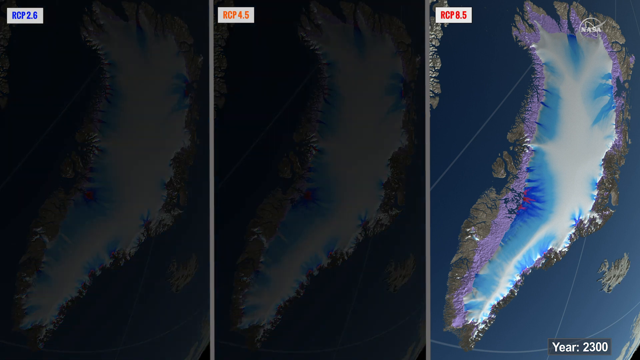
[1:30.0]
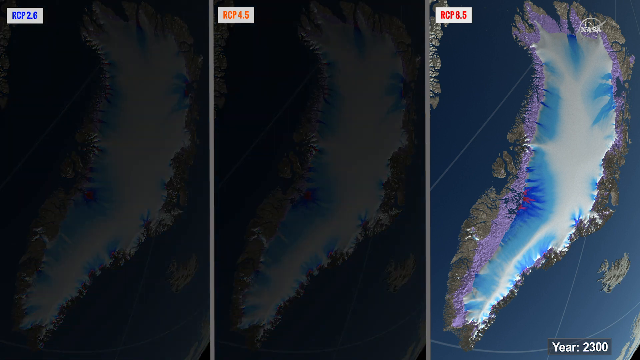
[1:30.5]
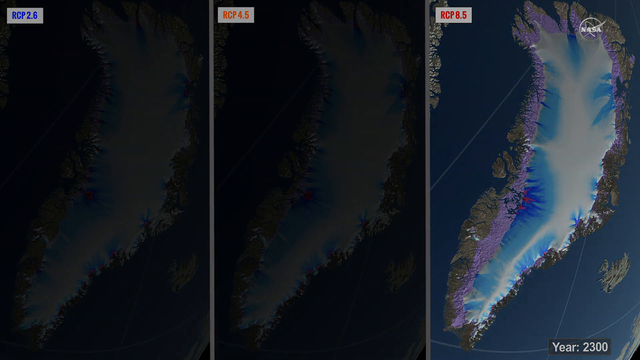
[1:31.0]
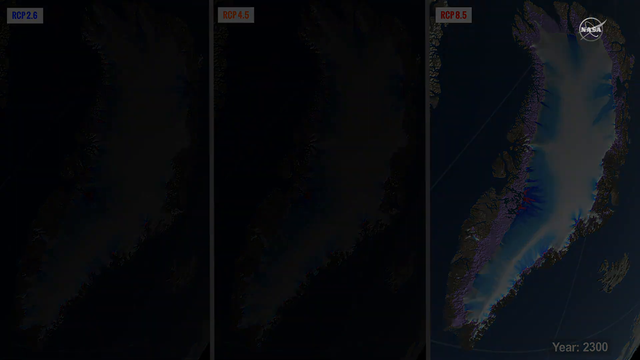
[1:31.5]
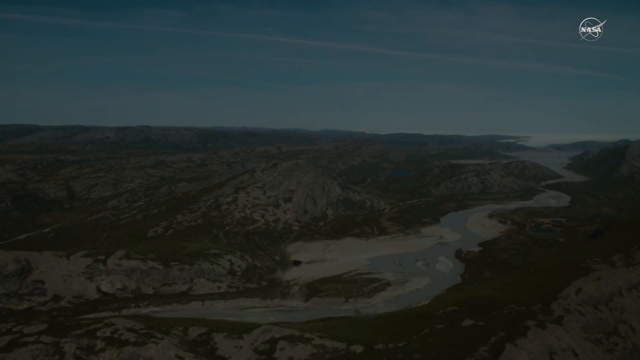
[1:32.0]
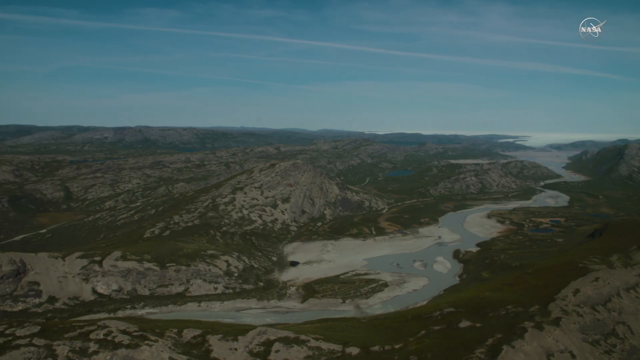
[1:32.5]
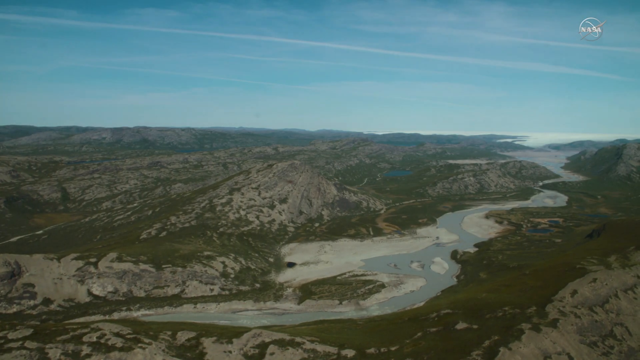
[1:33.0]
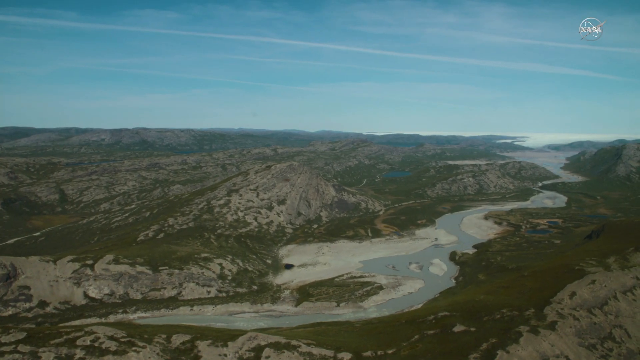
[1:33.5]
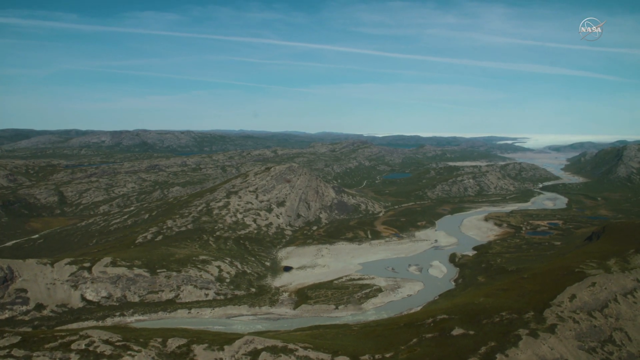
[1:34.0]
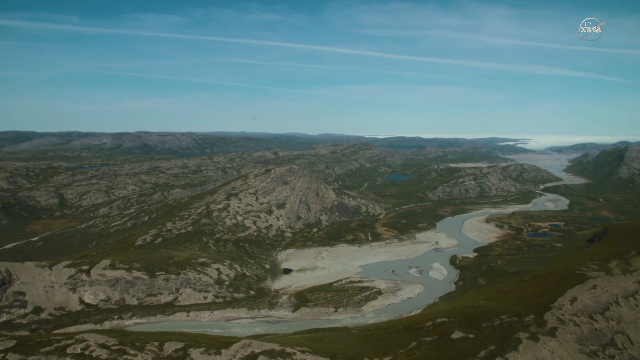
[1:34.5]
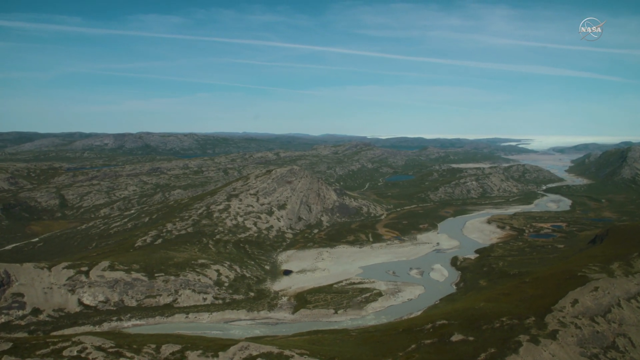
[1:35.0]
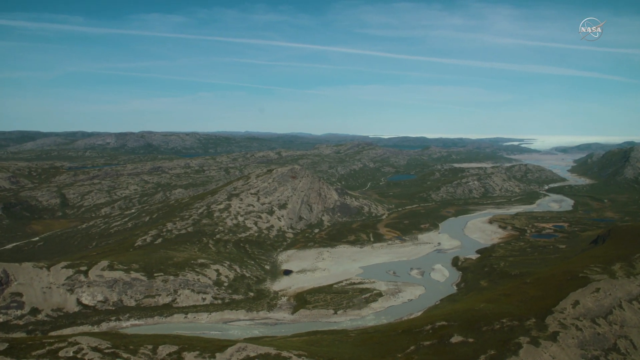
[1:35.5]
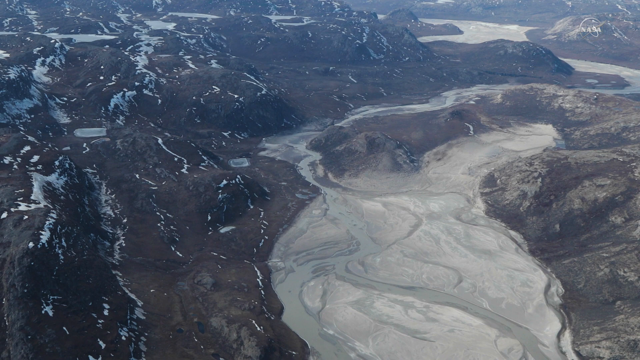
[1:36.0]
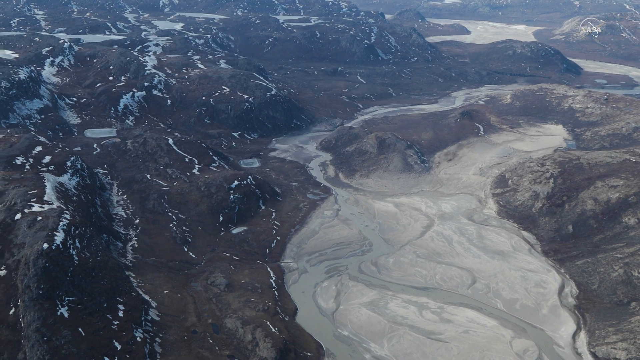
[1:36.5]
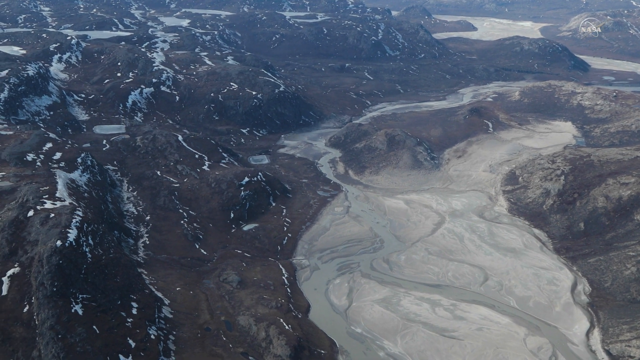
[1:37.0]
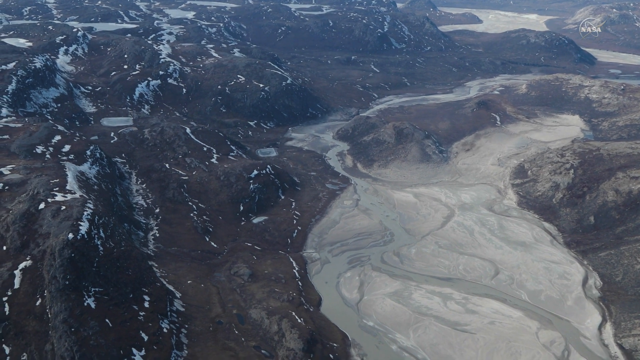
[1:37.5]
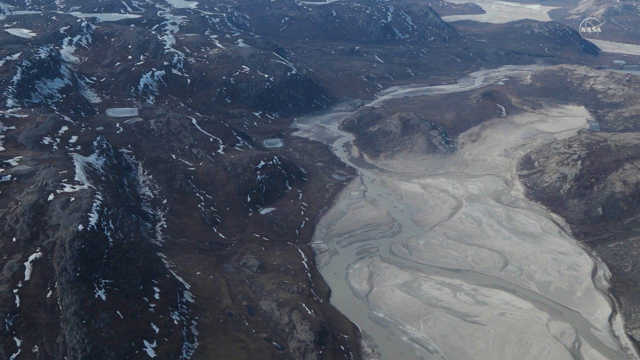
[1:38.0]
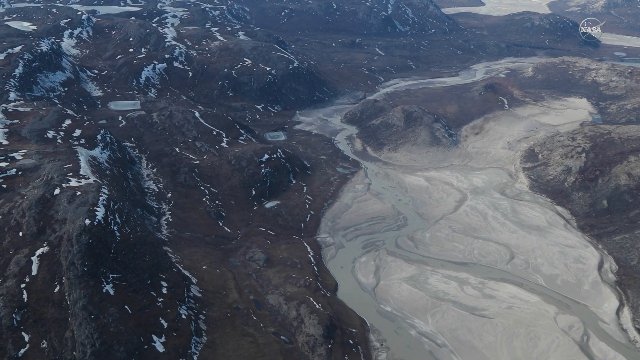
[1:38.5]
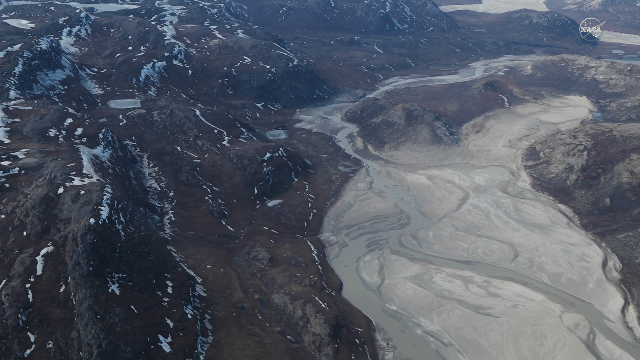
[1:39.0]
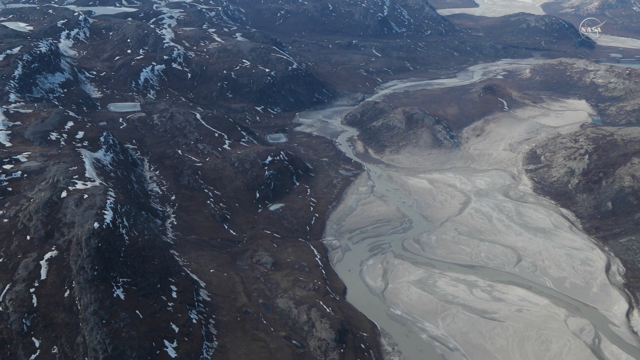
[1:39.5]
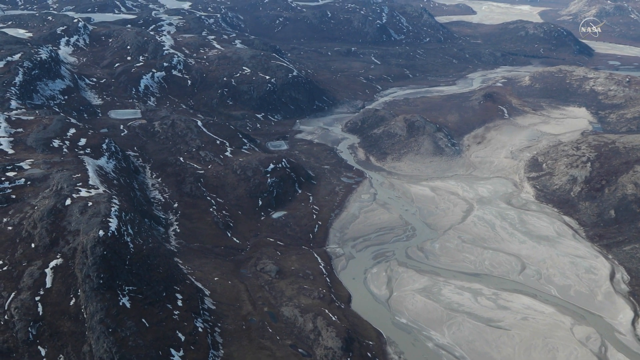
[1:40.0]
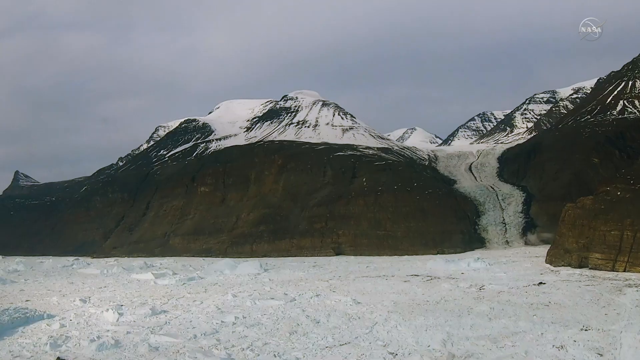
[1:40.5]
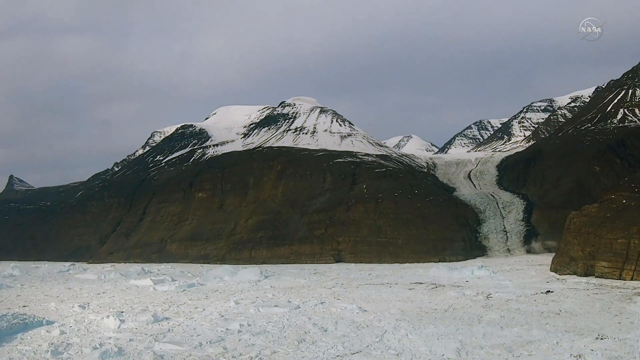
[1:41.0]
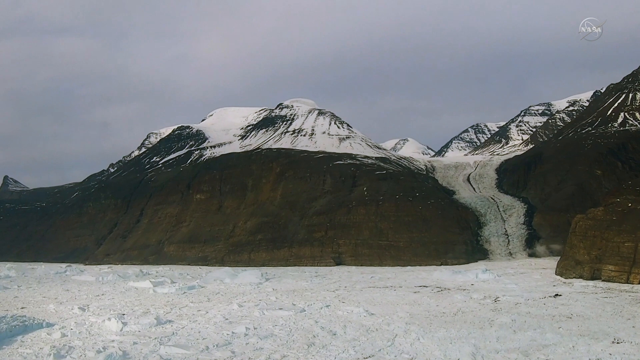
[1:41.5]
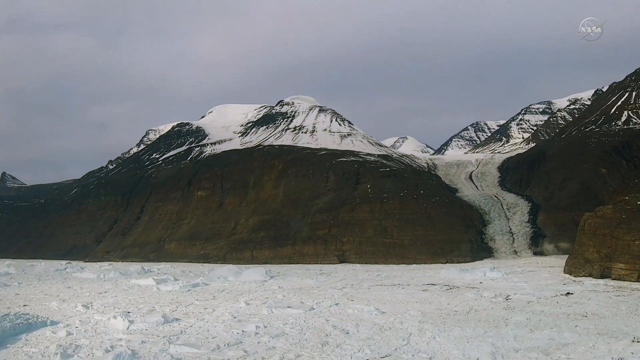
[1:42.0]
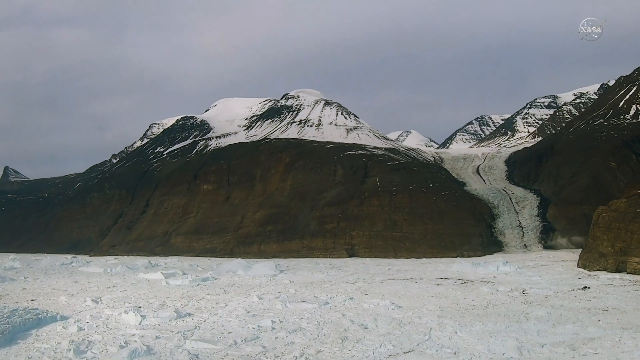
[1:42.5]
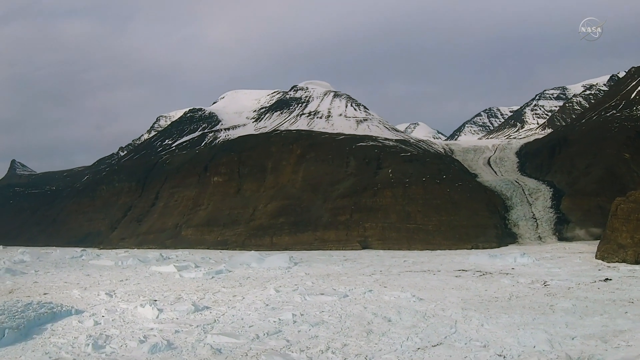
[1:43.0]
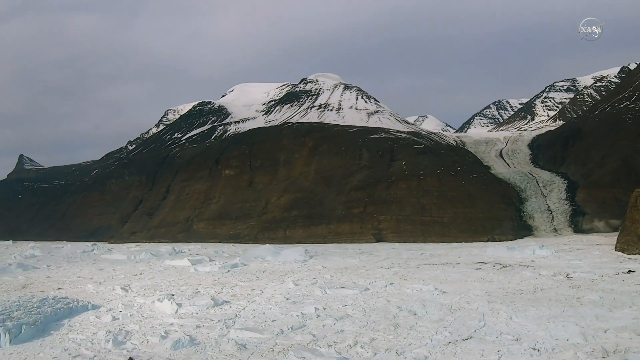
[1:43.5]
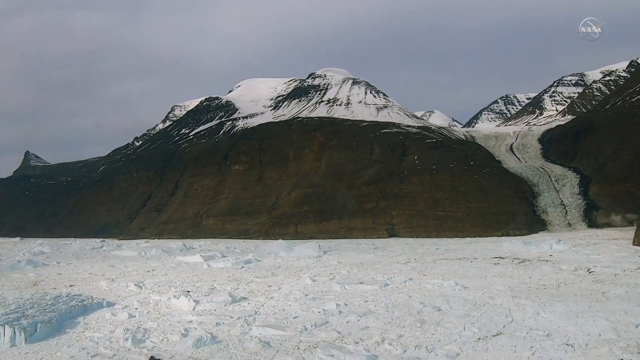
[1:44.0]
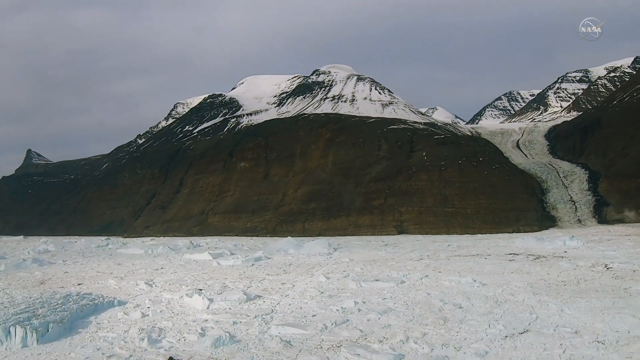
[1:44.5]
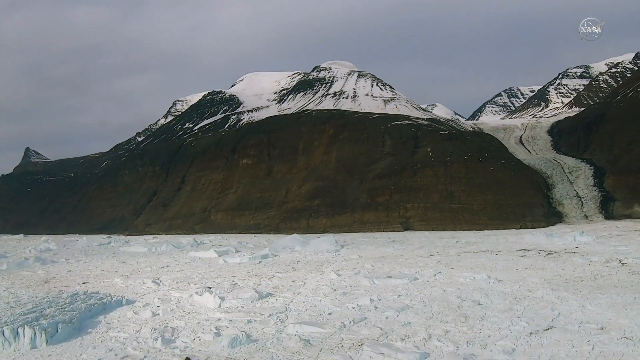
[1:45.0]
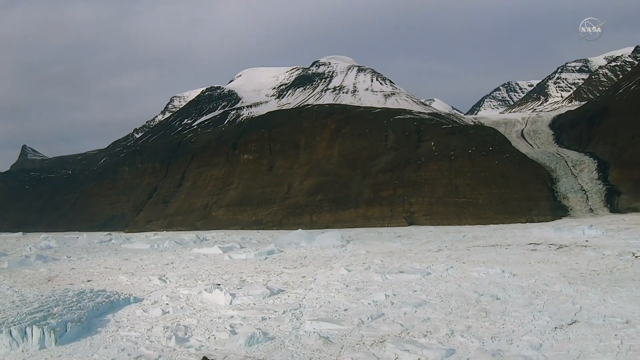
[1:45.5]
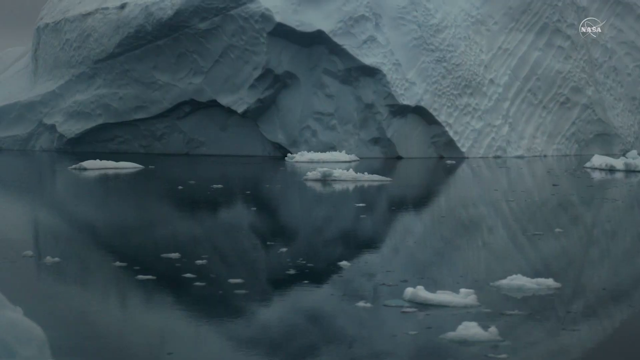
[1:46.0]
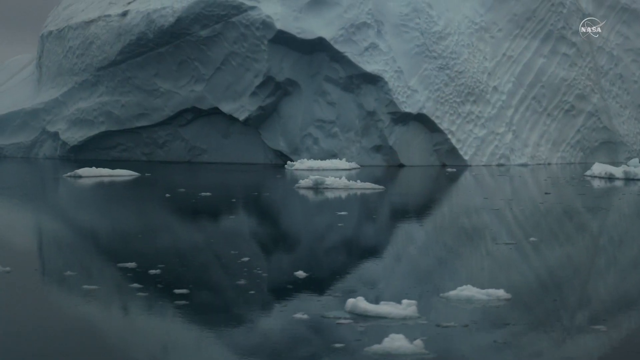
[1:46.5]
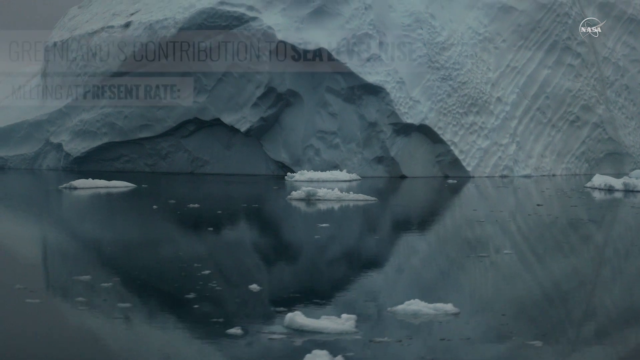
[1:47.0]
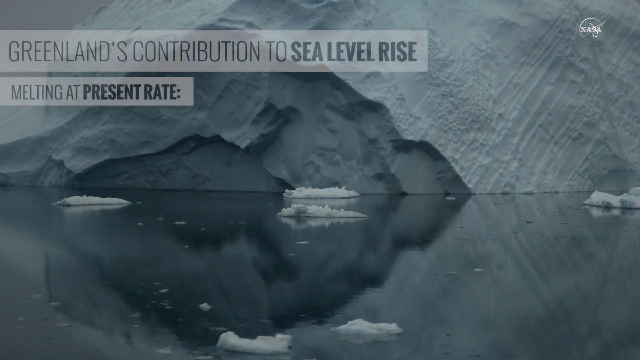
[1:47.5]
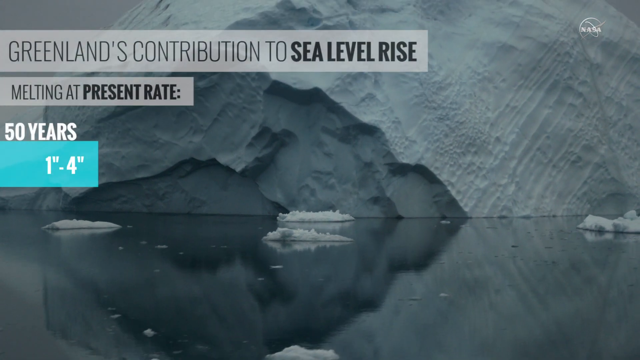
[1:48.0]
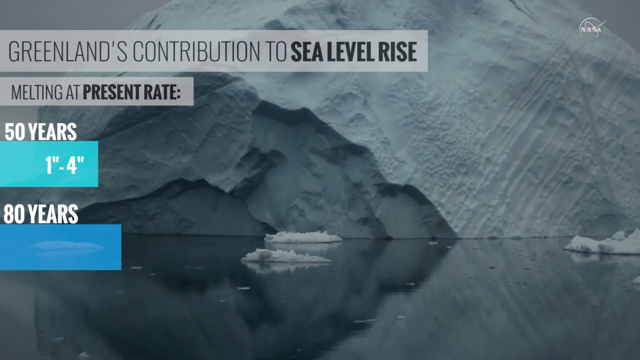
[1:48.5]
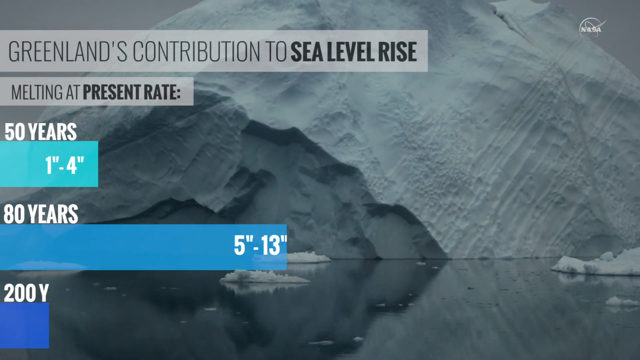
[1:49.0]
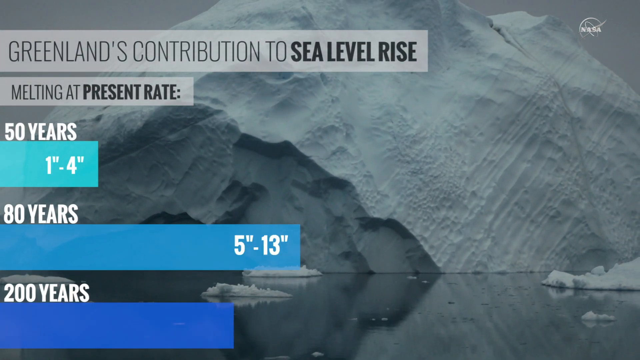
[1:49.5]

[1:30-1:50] A satellite view shows an island area on the right, with the NASA logo in the right corner. The scene switches to a large valley in Alaska with a river through its center and green trees growing down the center. A glacial valley follows, with a large glacier still in the very center down in the valley, while to its right and left much of the land is exposed where the snow has melted away. Glacial runoff comes down between two mountains and runs into the ocean; the runoff of ice comes down the hillside in the right-center part of the image, with snow-capped mountains in the background. A large glacier floats in Greenland, with text reading "Greenland's contribution to sea level rise, melting at present rate, 50 years, 80 years." The glacier is apparently melting.